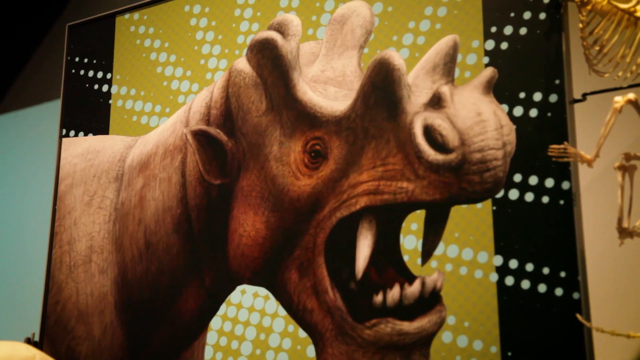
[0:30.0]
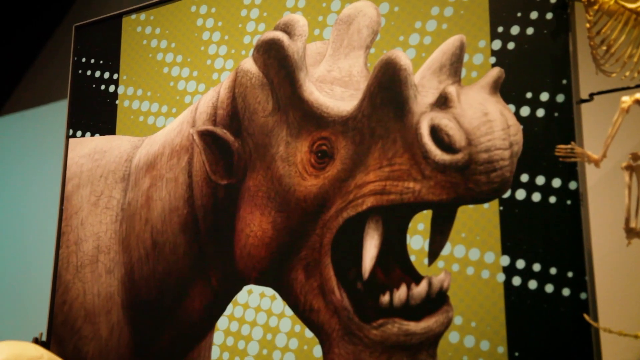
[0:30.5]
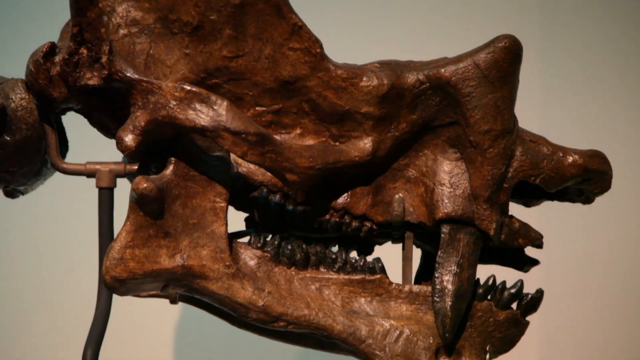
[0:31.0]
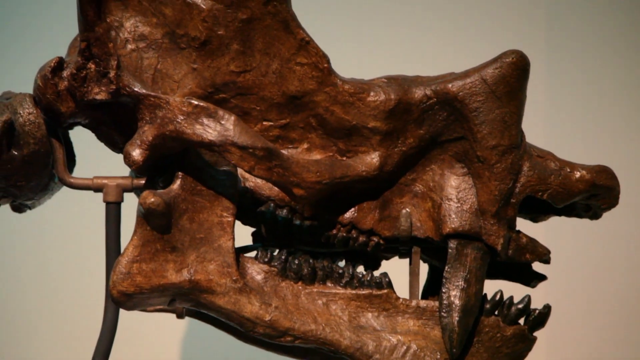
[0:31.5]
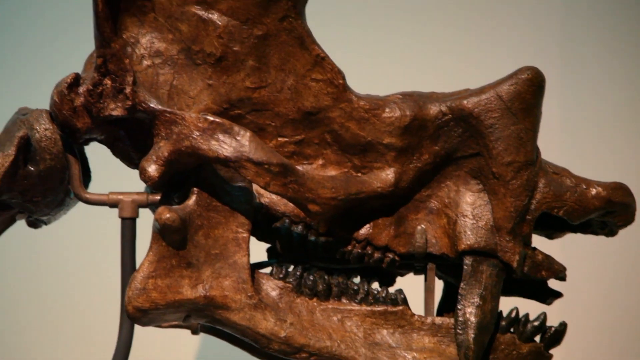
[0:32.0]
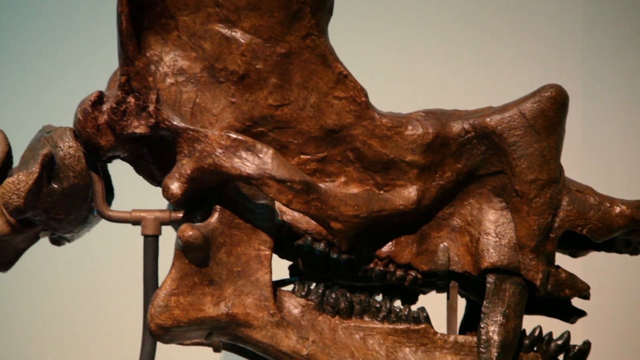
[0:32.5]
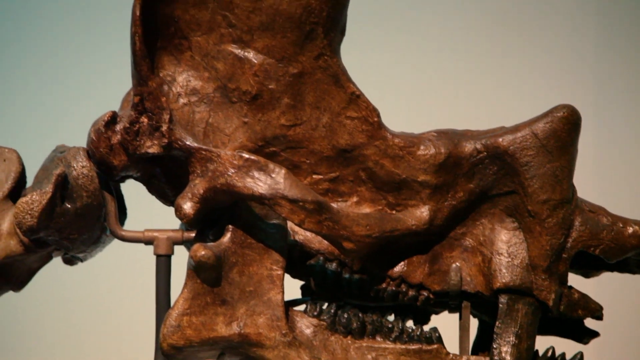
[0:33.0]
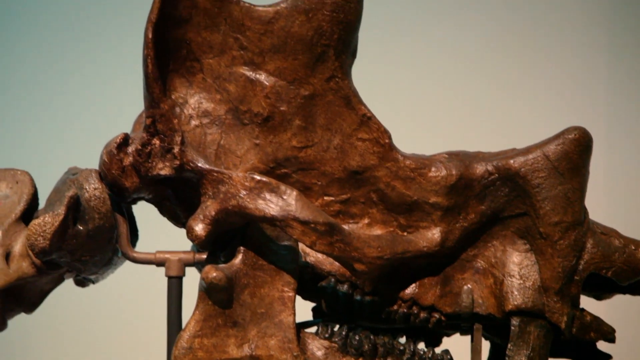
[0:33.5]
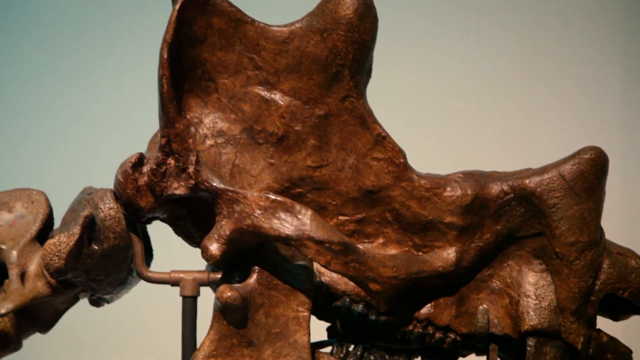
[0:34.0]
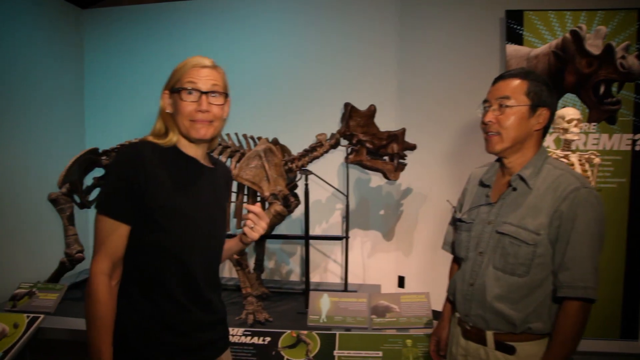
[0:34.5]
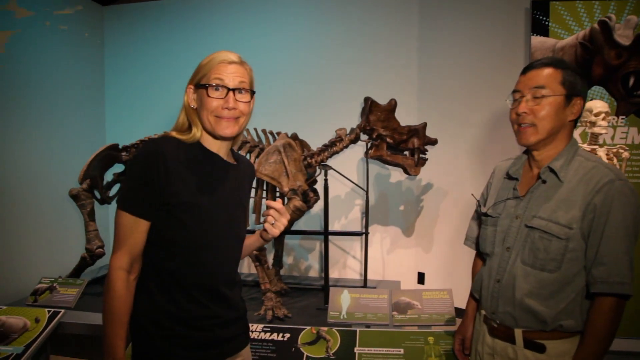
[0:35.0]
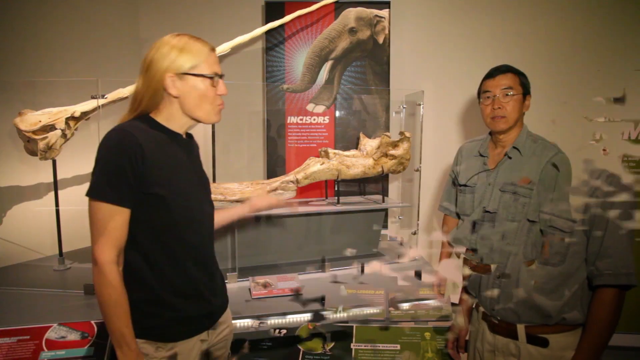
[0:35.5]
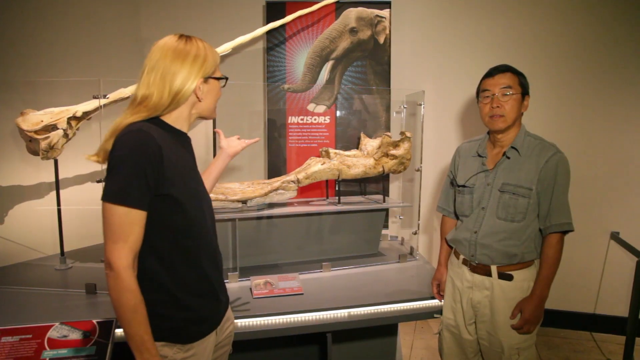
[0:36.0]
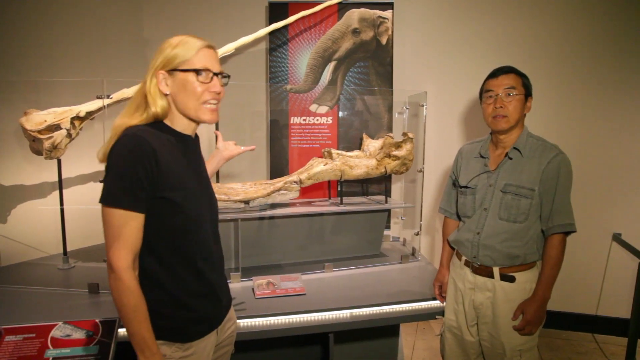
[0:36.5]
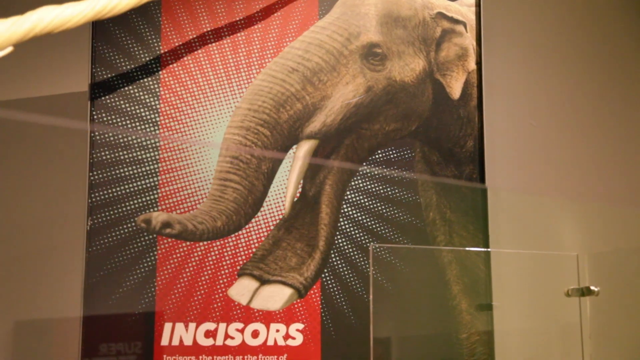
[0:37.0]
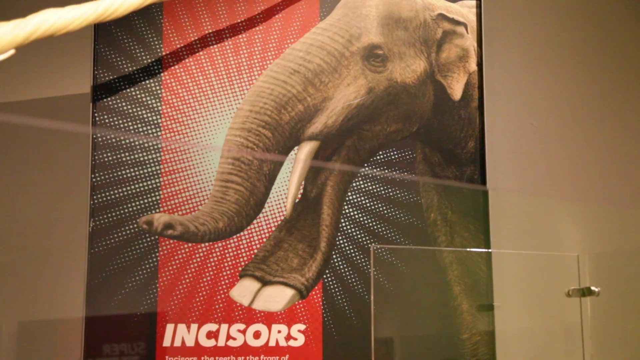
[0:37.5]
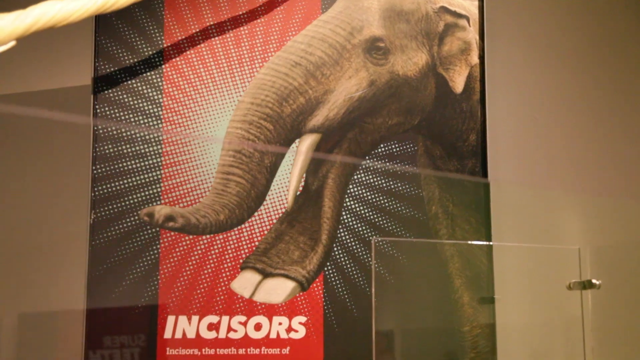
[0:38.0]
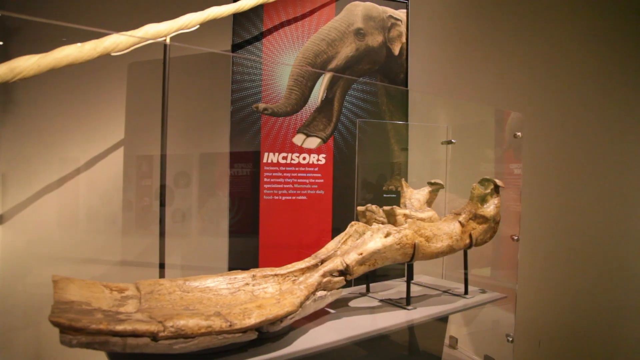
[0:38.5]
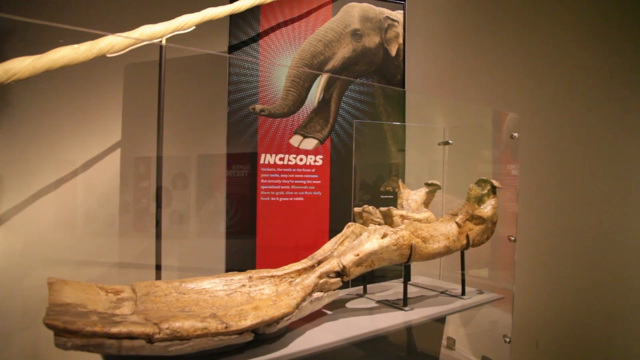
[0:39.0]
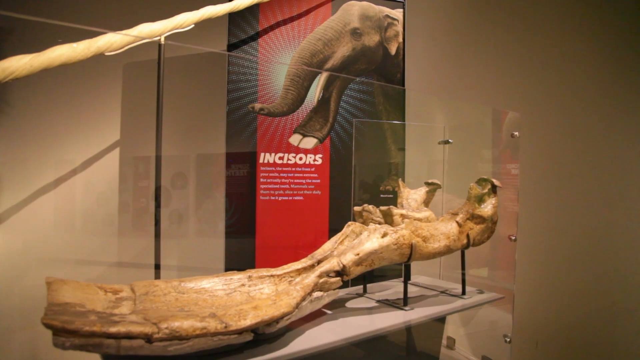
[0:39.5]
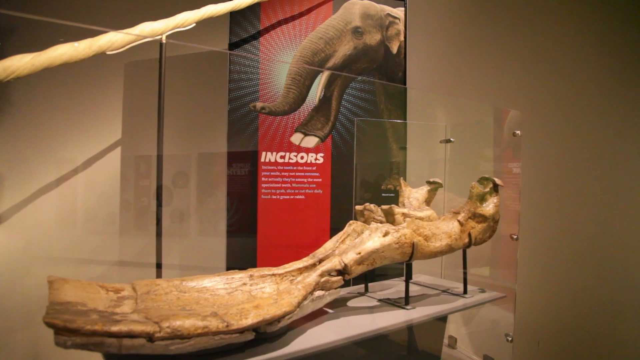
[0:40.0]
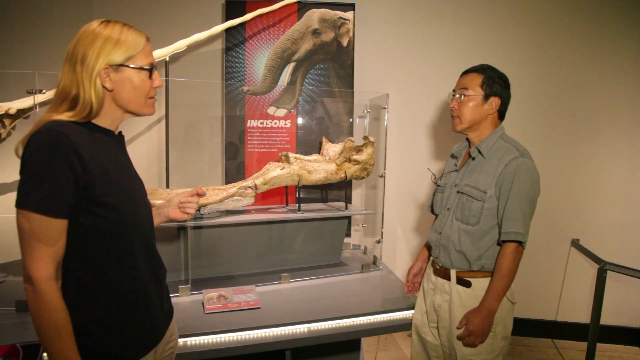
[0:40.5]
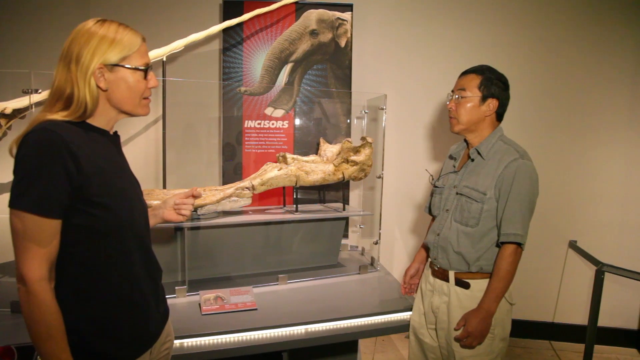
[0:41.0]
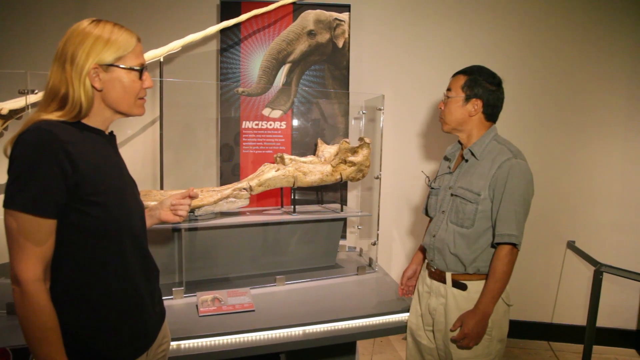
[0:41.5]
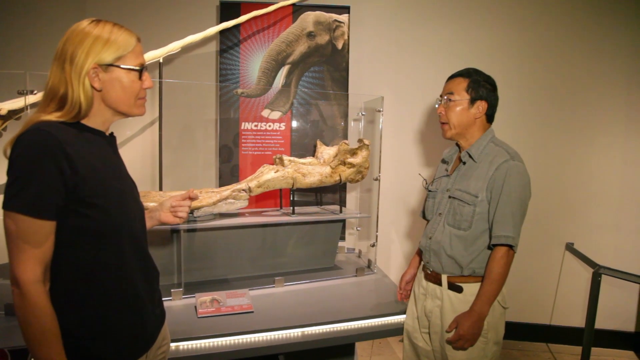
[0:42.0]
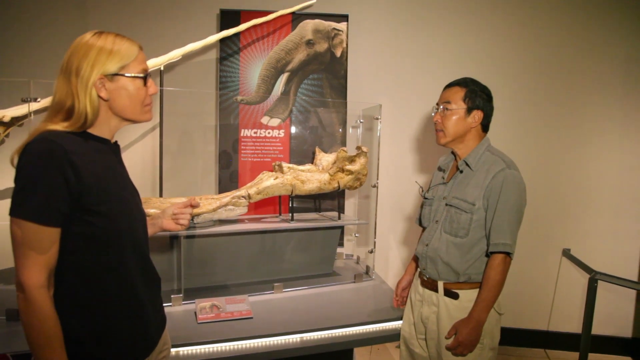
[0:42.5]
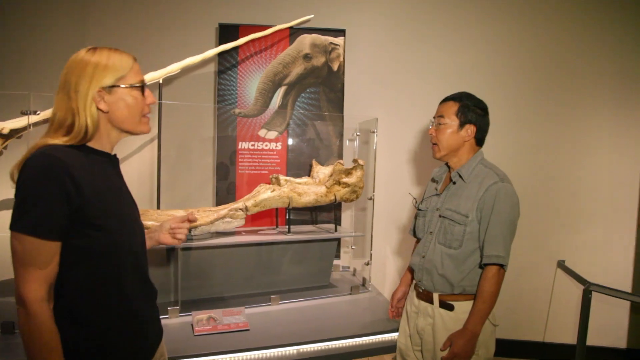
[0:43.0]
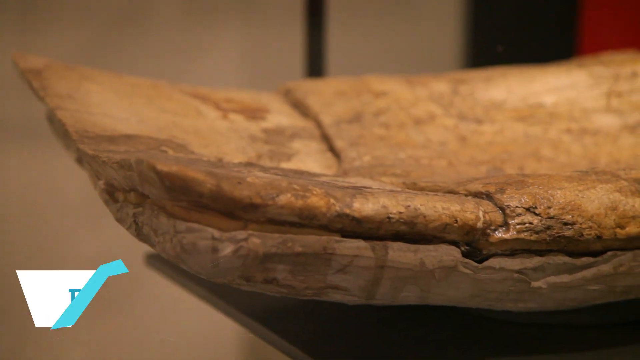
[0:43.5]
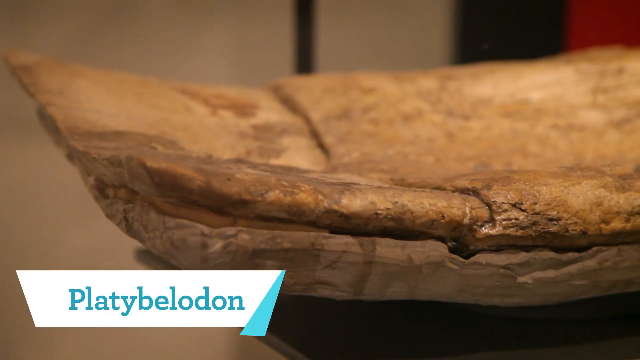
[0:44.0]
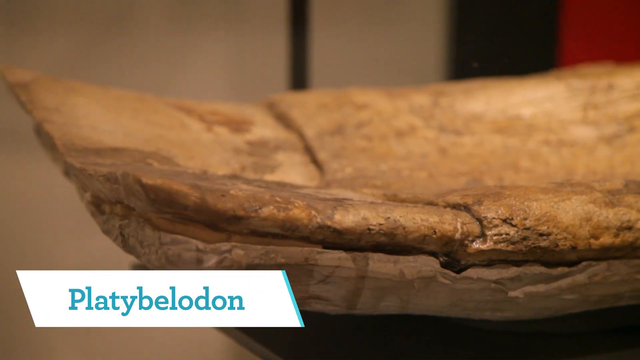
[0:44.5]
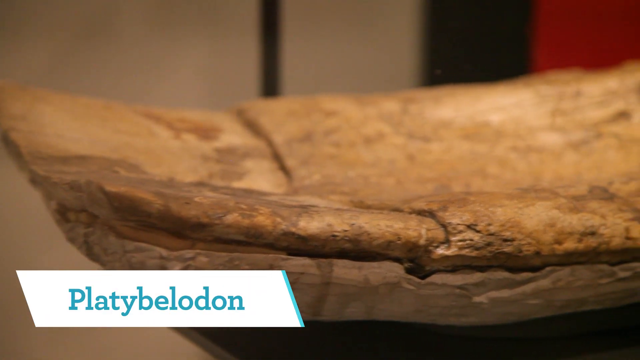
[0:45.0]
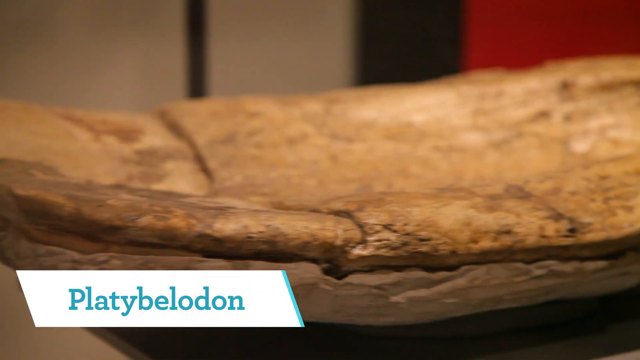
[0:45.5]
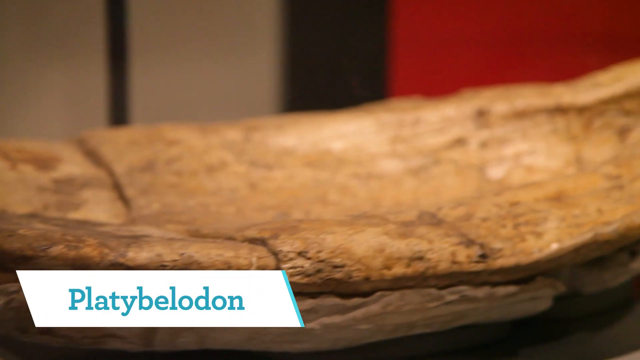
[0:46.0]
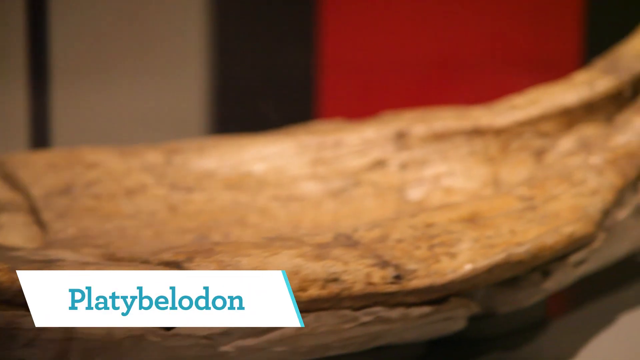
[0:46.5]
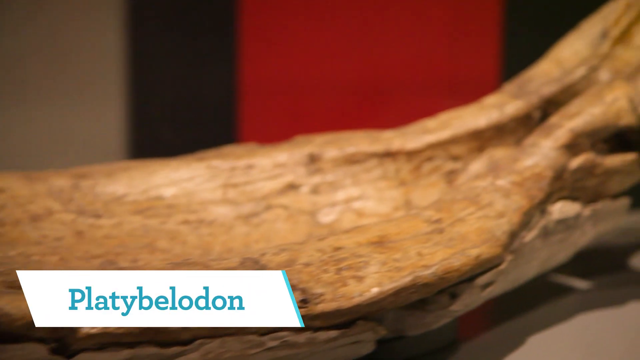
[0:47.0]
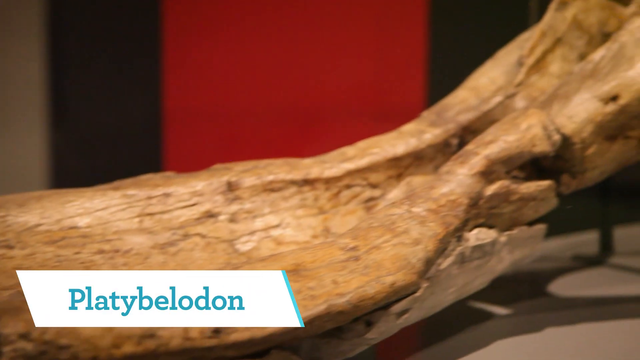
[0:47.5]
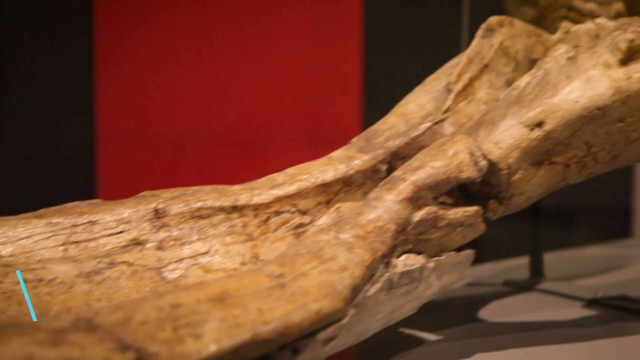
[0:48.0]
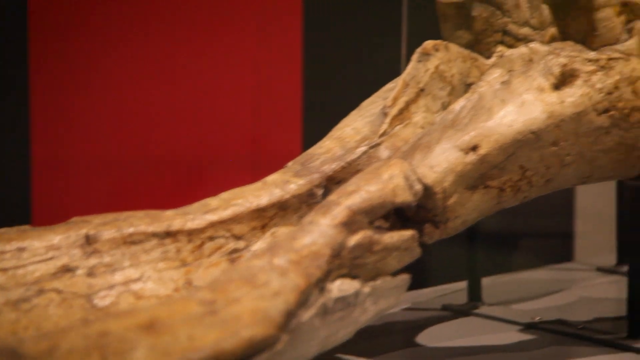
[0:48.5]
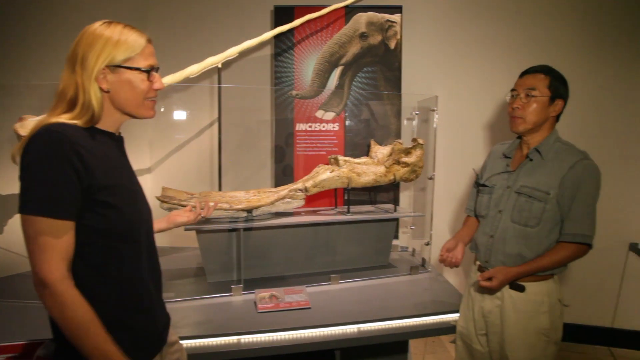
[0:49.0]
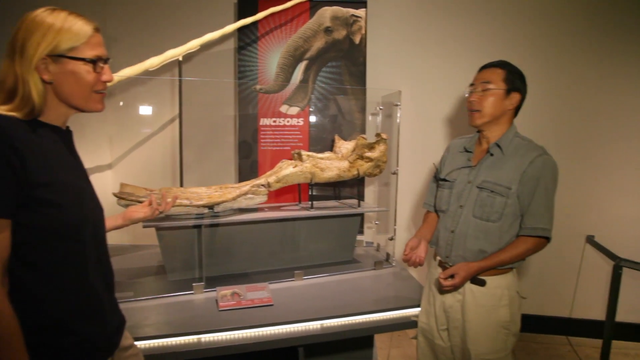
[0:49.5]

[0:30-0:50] A very strange-looking creature with pointed, stubby ears, big teeth, and knobs on top of its head is shown. The video switches to a skeleton of another creature; its teeth are visible and its skull looks kind of brown. The view then switches to a woman with blonde hair, black-framed glasses, and dark eyes, smiling funny and wearing a black short-sleeved shirt. She is standing next to a man with dark hair and dark eyebrows wearing a button-up shirt, and both are standing in front of a skeleton of a creature. The view changes to the two standing in front of another display that says "in scissors." Two large bones or skeletons of some kind are shown, and an elephant-looking creature is on a display in the back, behind the skulls or bones; it looks sort of like an elephant.